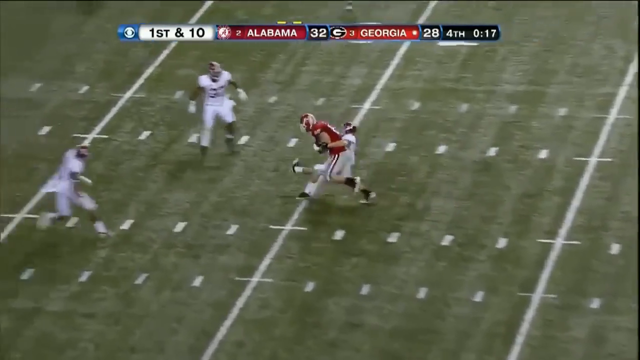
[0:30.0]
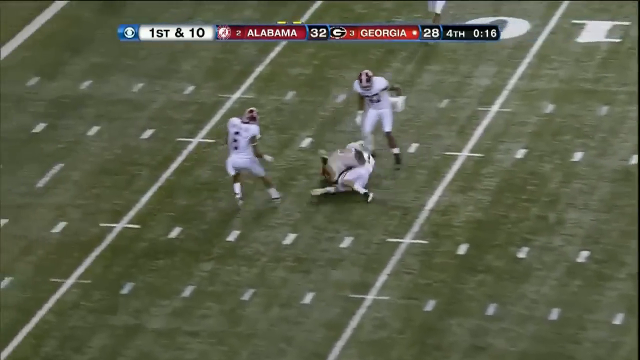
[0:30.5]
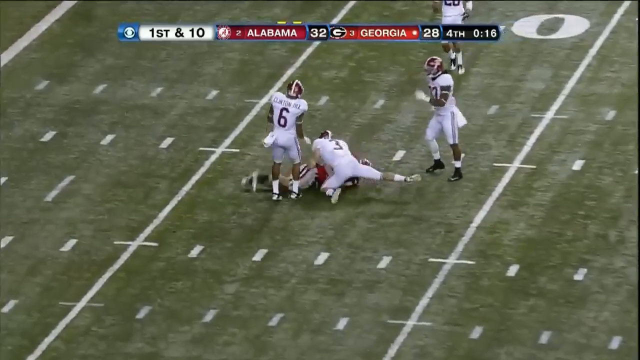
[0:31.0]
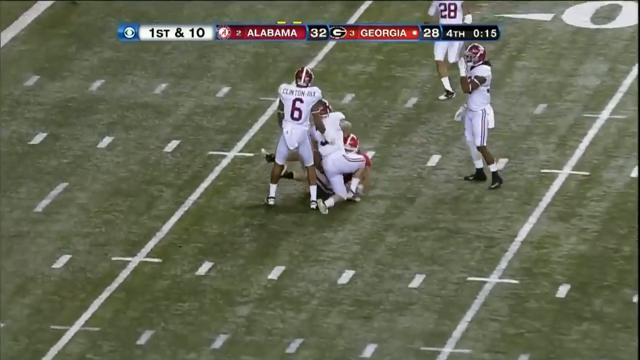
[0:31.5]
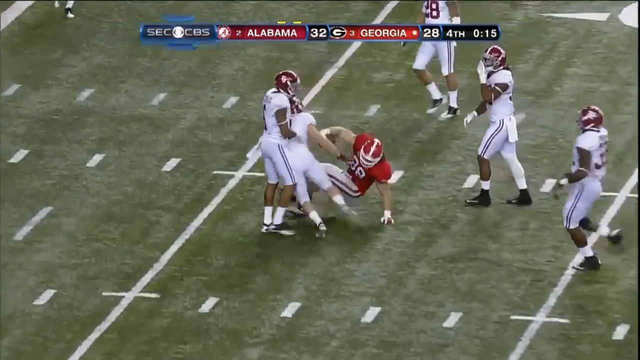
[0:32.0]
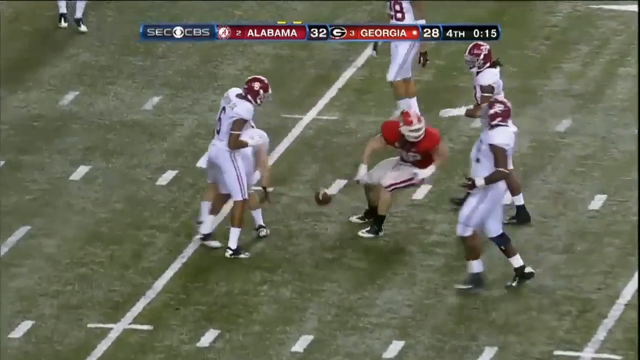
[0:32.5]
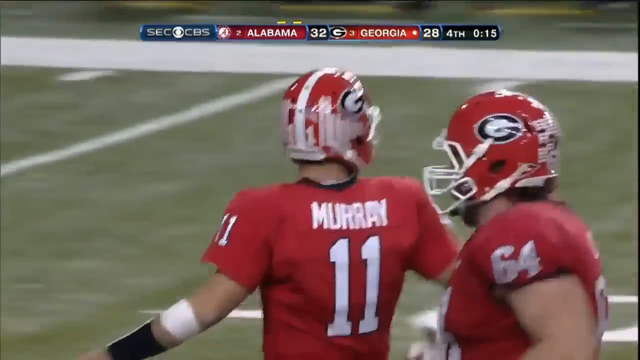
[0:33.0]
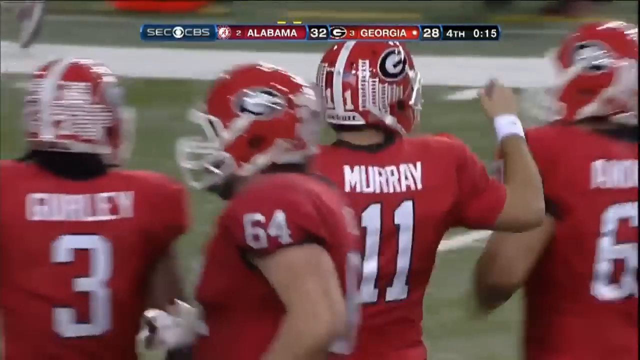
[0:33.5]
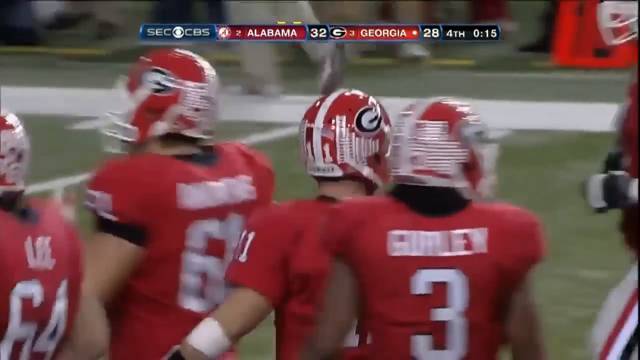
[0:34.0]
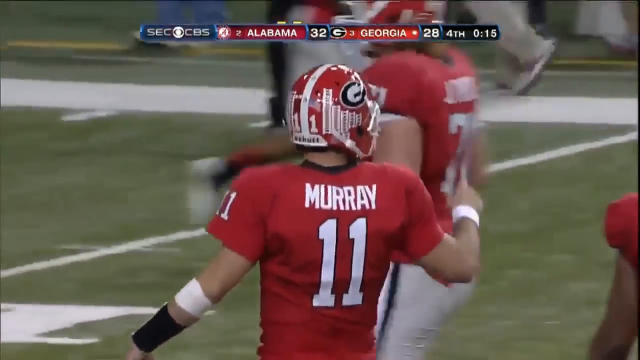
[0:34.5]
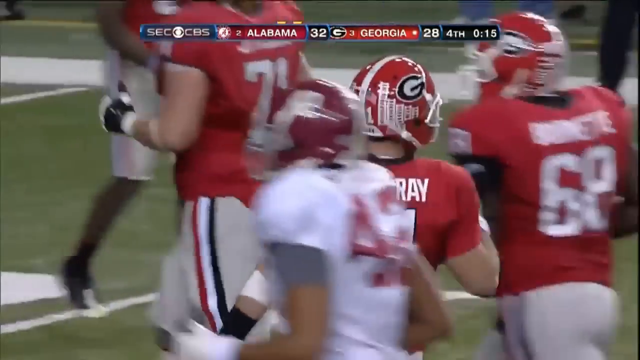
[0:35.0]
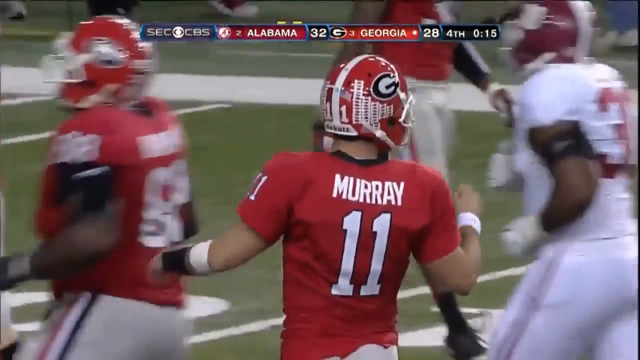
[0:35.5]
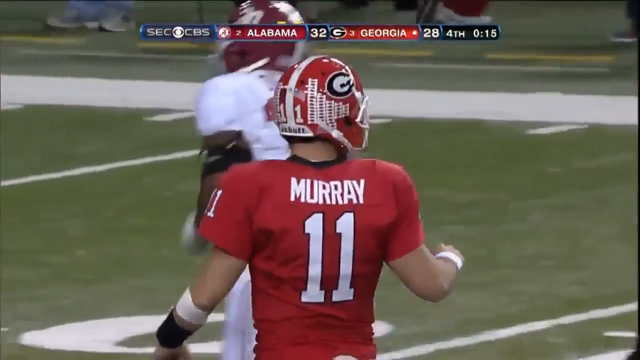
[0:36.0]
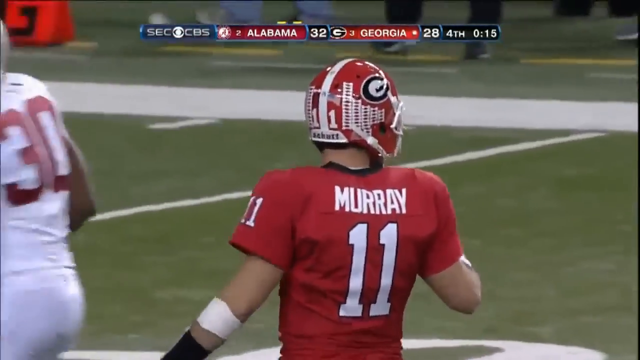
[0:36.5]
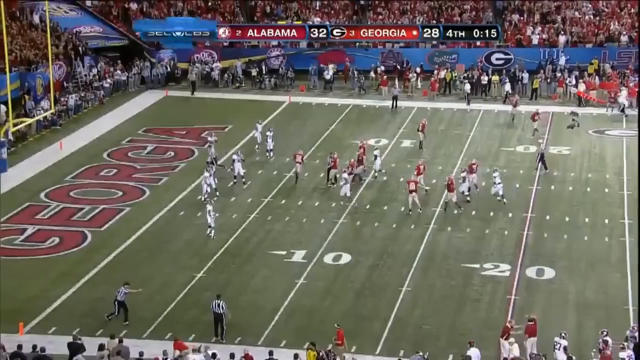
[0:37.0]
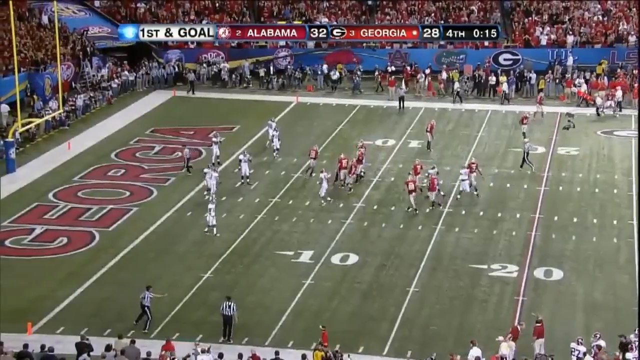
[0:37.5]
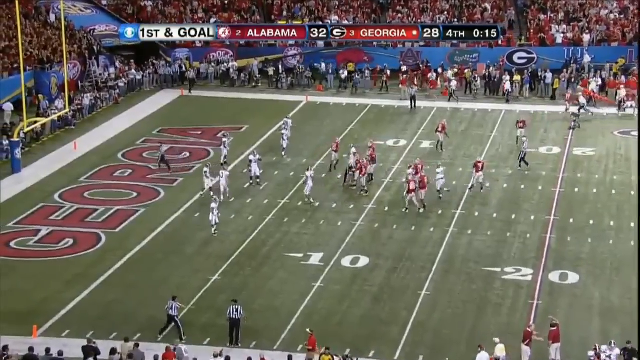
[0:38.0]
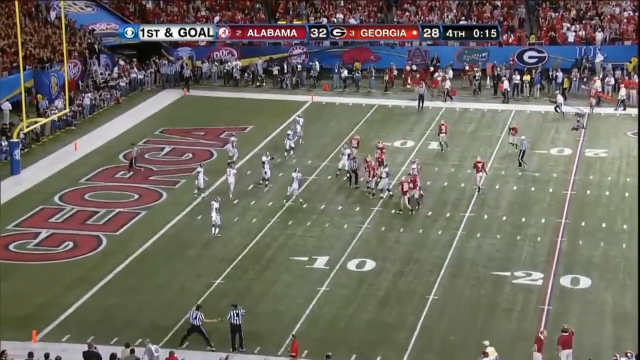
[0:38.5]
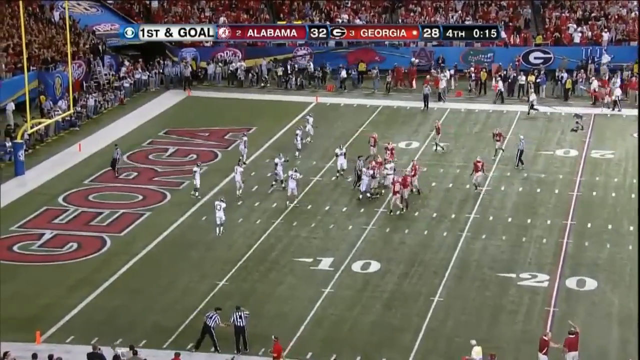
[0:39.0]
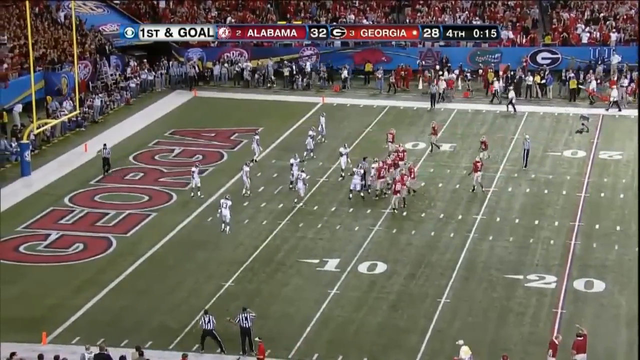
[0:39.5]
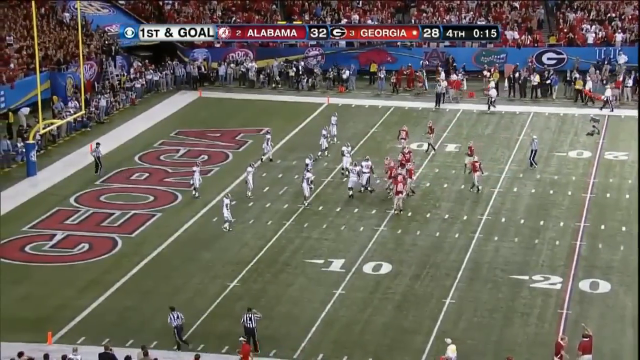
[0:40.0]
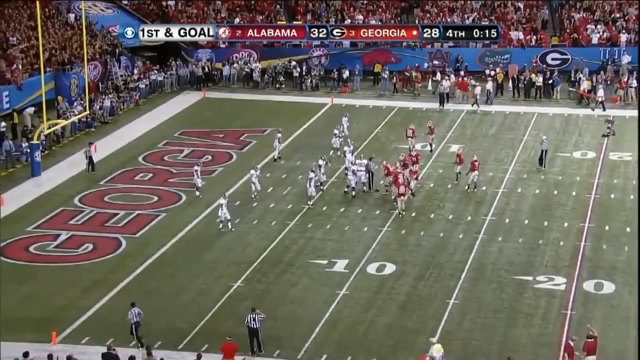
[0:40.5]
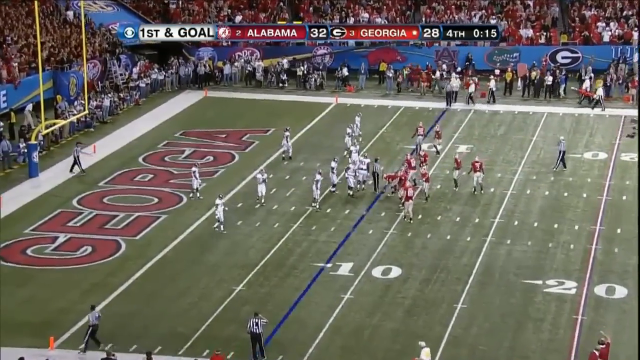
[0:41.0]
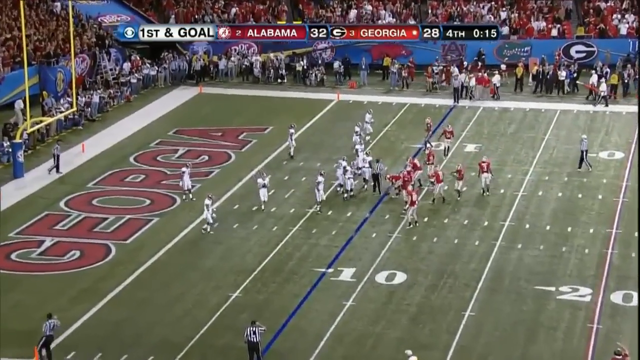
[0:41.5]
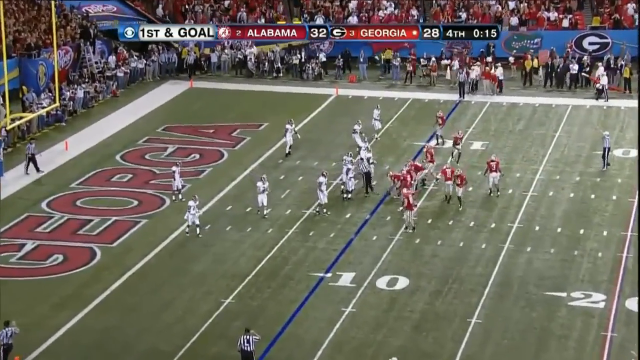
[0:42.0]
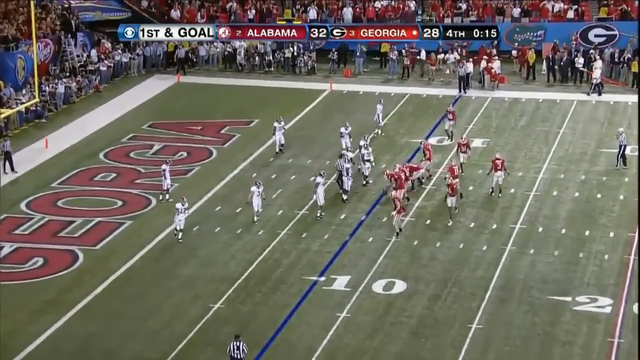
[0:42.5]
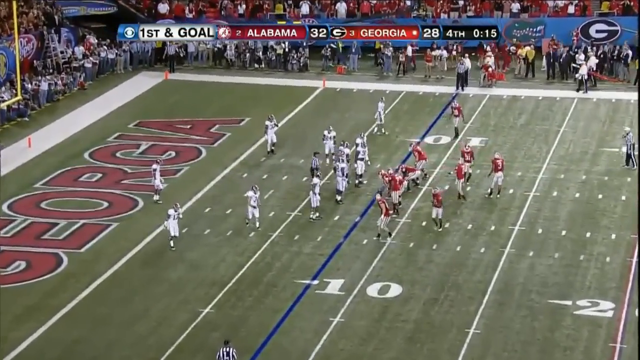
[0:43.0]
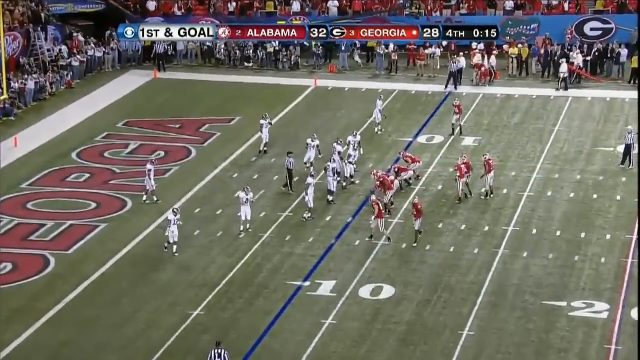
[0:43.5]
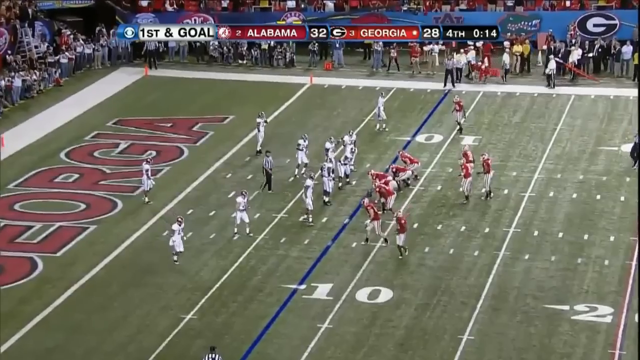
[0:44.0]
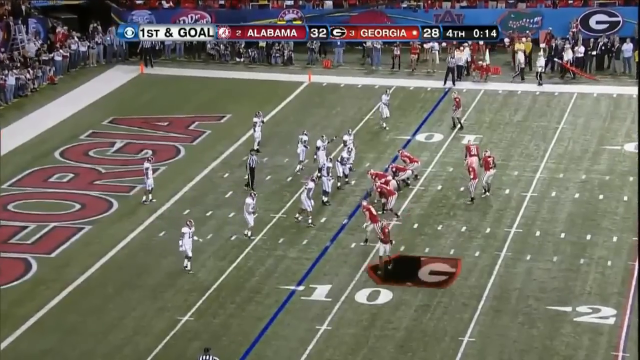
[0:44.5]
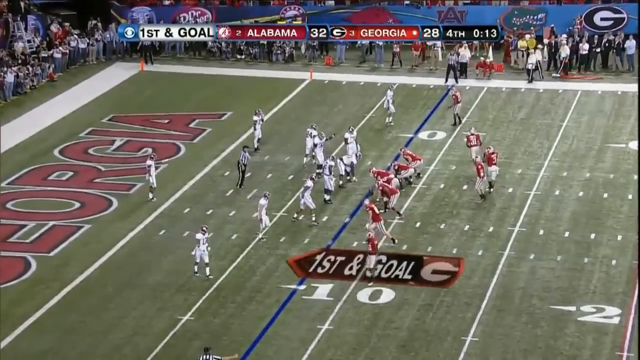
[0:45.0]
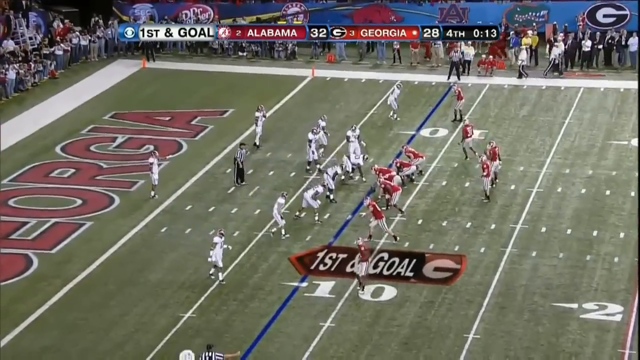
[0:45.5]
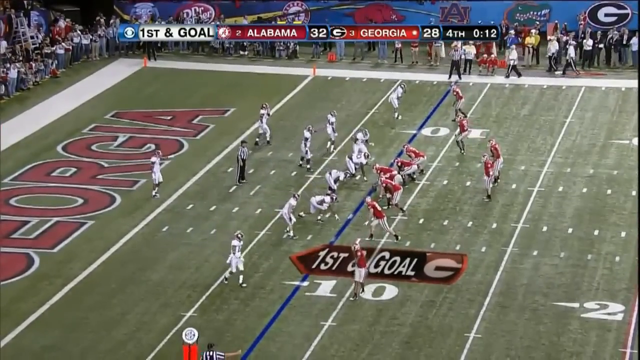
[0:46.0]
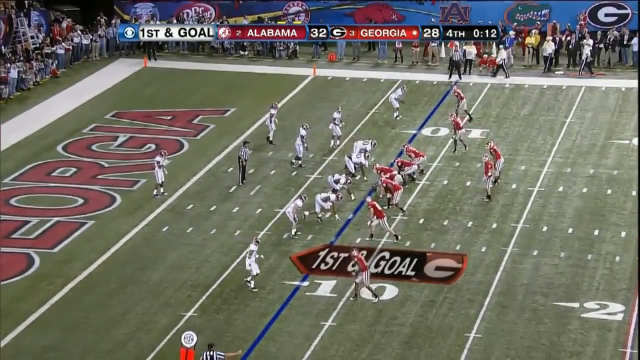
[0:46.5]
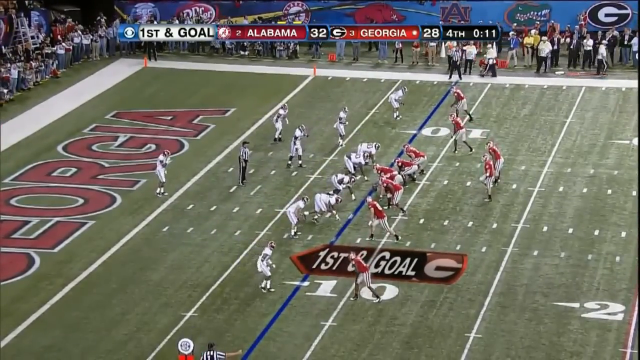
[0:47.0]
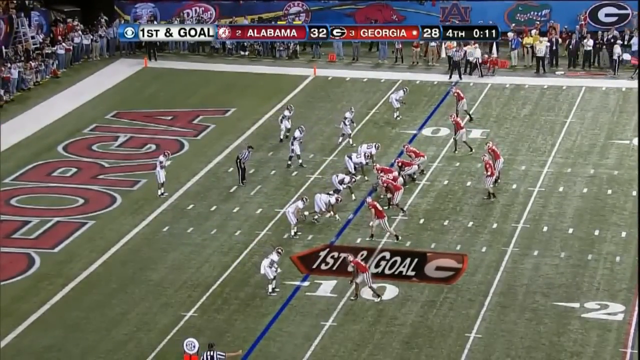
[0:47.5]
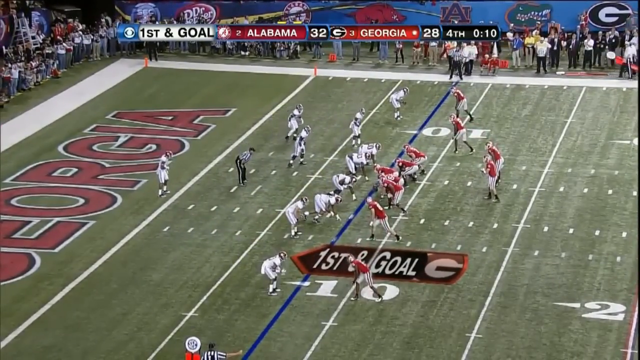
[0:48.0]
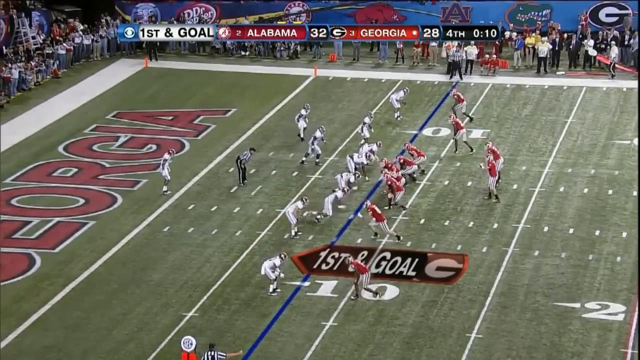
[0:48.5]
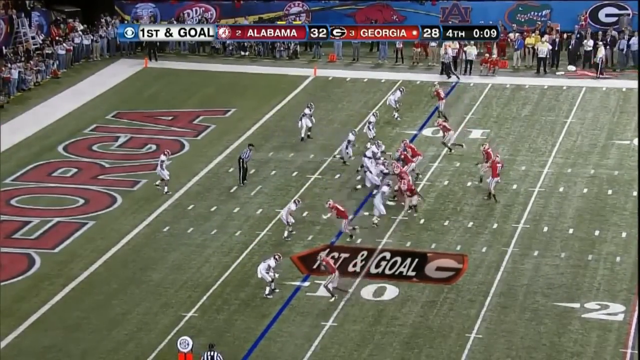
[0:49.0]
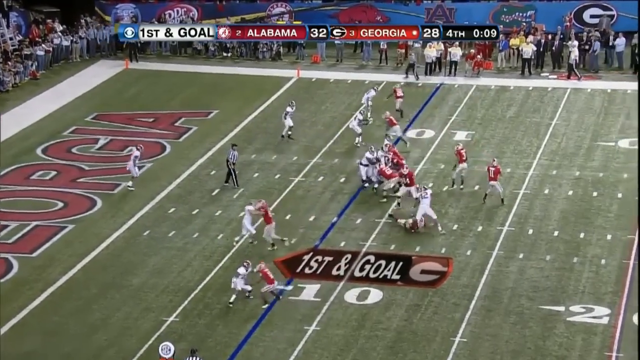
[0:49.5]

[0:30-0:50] A player who has caught the ball runs to the left while a defender in a white jersey, number three, wraps his arms around the player's waist and brings him down, then lies on top of him. The player in the red jersey quickly gets up as time runs out and runs to the right. The scene changes to the quarterback leading his team, raising his right hand up and down and running to the left as all the players try to get to the ball to snap it. The clock has stopped at 15 seconds. As the players get ready for the next play, a large blue line appears on the field around the eight-yard line; the team is very close to the end zone. "Georgia" is painted on the far left of the end zone. A referee is at the end of the end zone, and another referee is on the far right near the 20-yard line. The quarterback lines up his players, with three receivers and a running back to the right. The ball is snapped, and the quarterback immediately looks to the right and throws the ball.